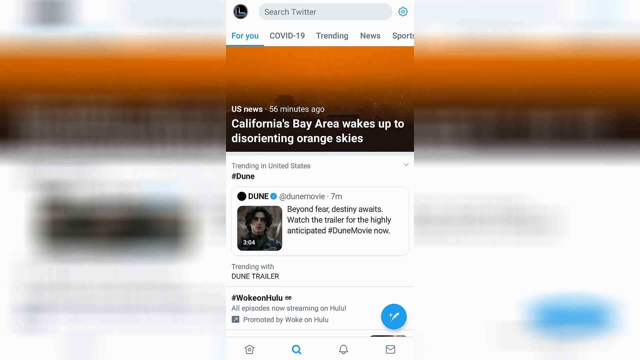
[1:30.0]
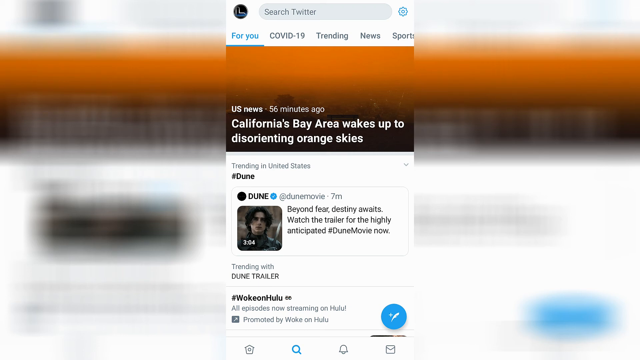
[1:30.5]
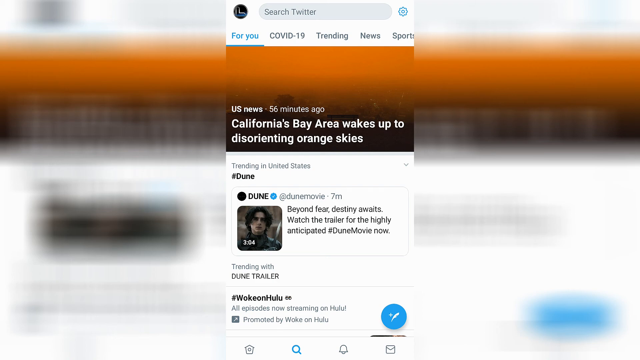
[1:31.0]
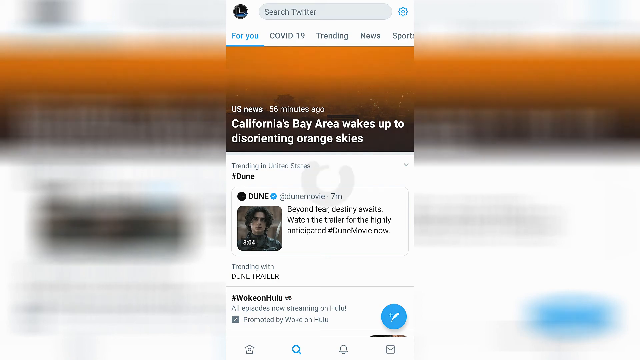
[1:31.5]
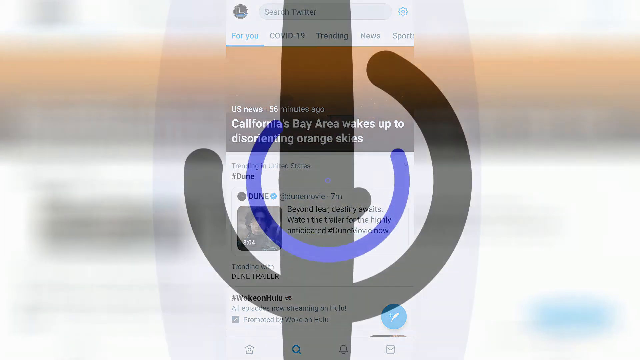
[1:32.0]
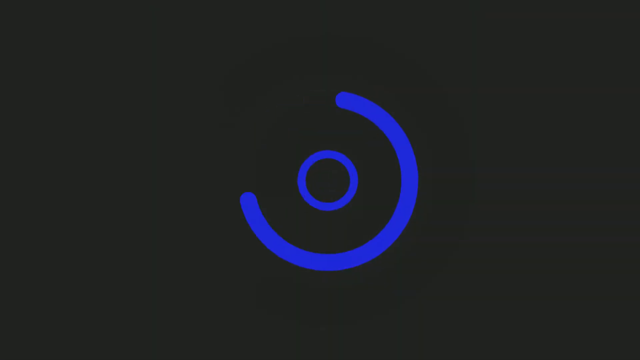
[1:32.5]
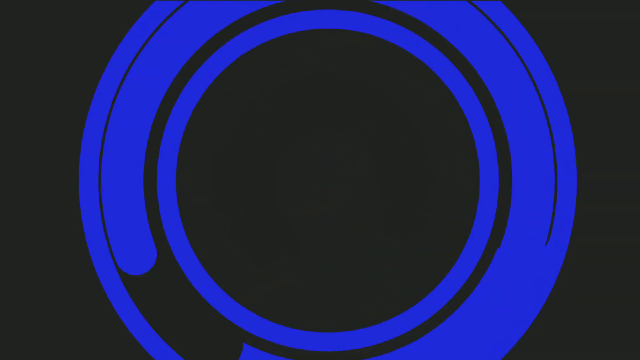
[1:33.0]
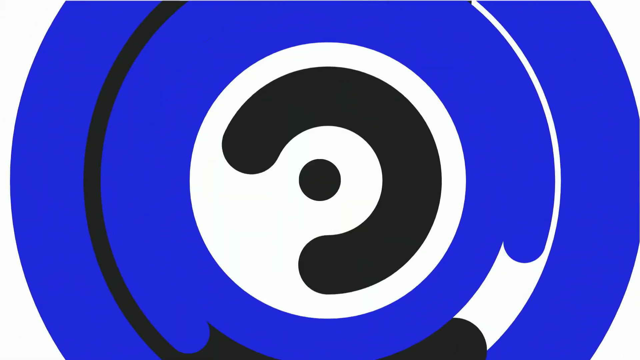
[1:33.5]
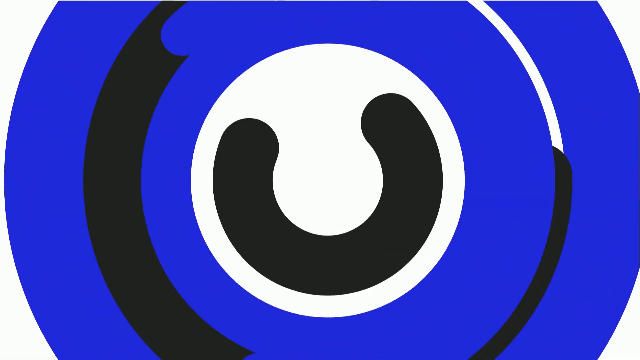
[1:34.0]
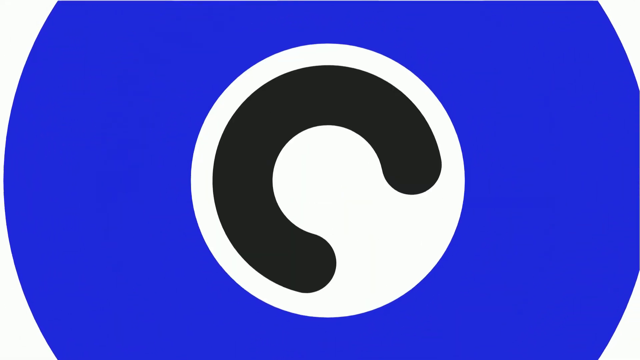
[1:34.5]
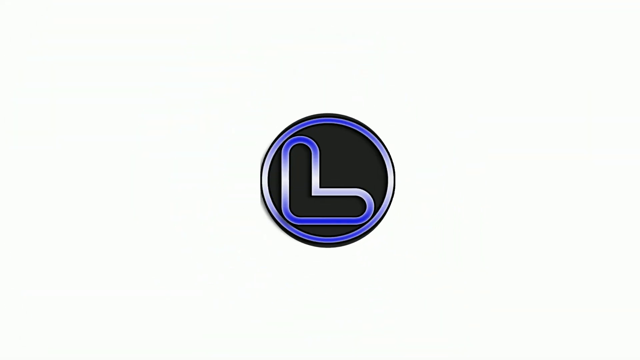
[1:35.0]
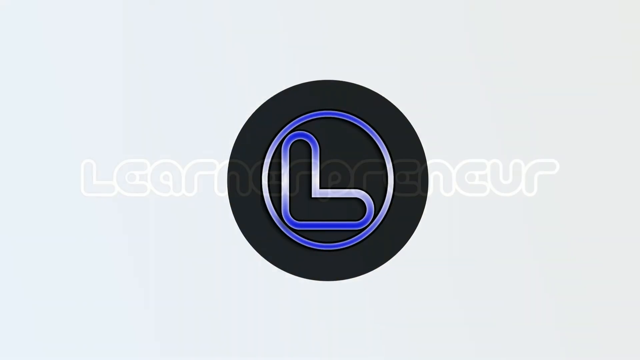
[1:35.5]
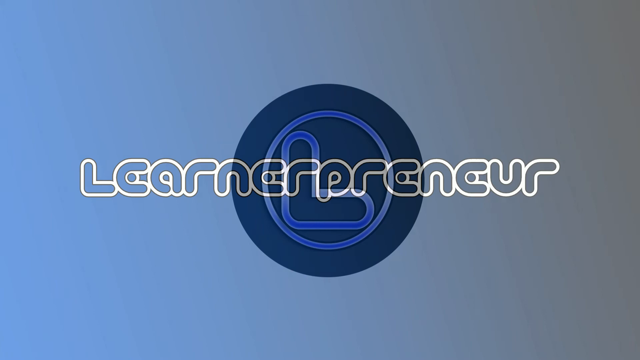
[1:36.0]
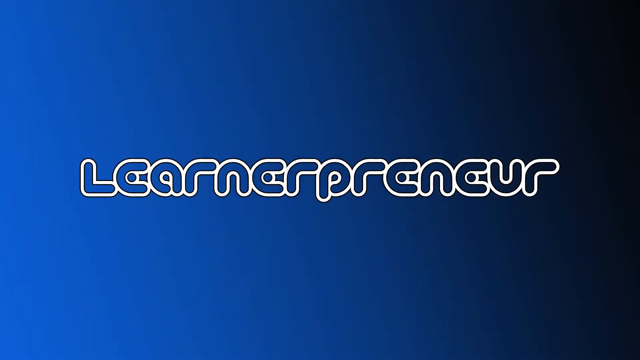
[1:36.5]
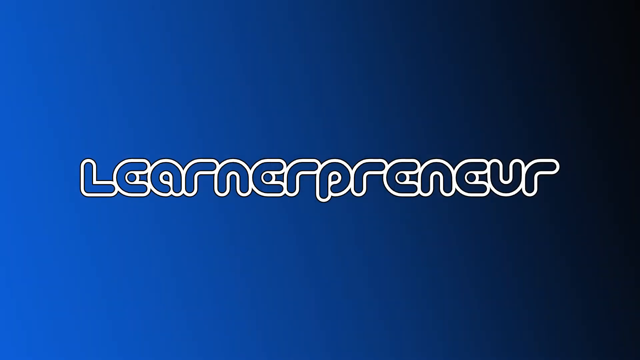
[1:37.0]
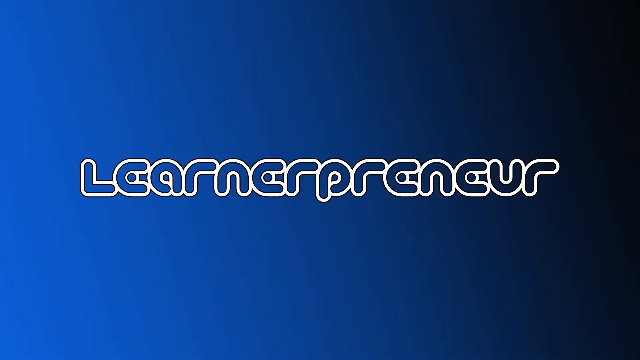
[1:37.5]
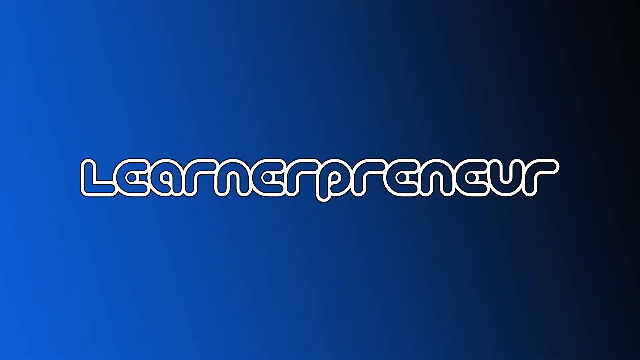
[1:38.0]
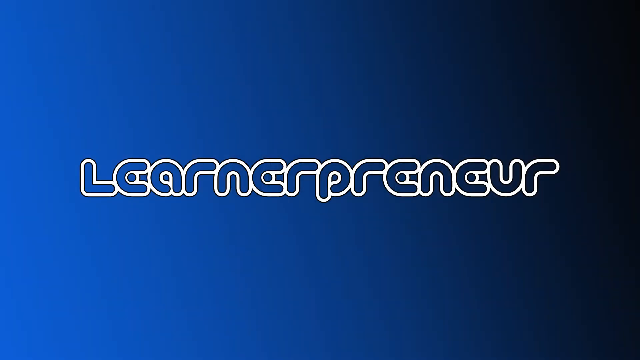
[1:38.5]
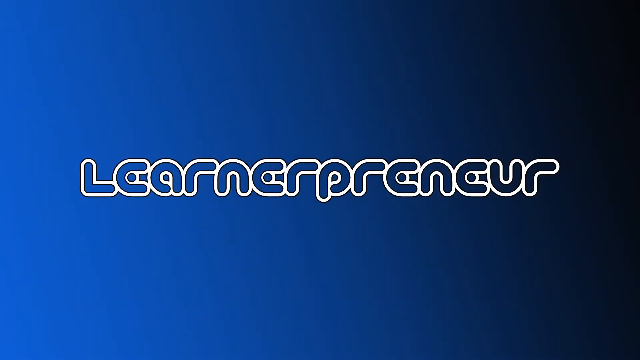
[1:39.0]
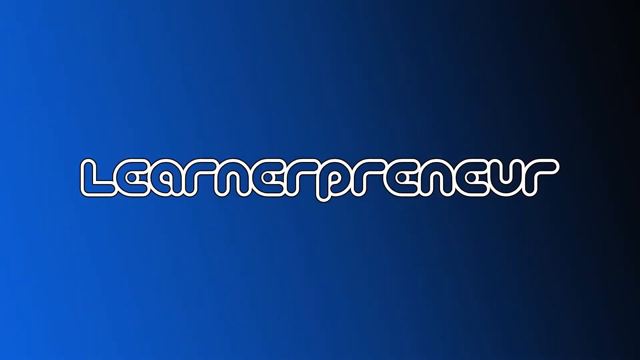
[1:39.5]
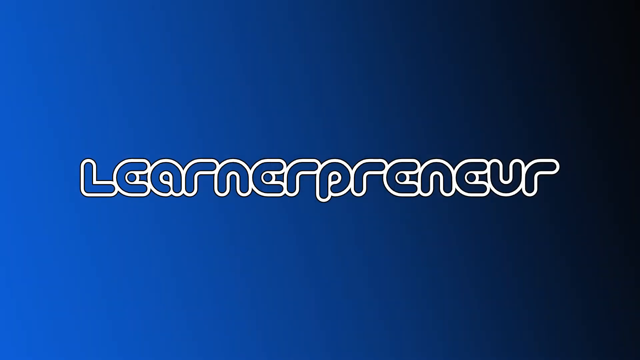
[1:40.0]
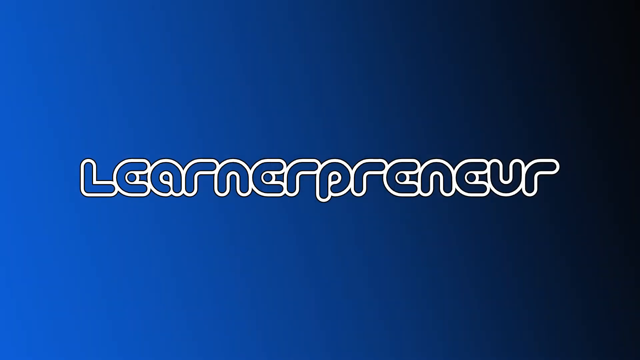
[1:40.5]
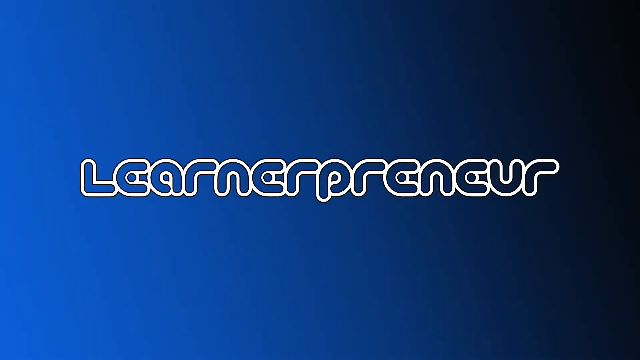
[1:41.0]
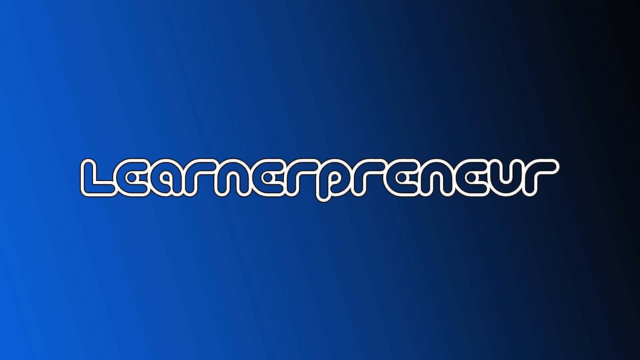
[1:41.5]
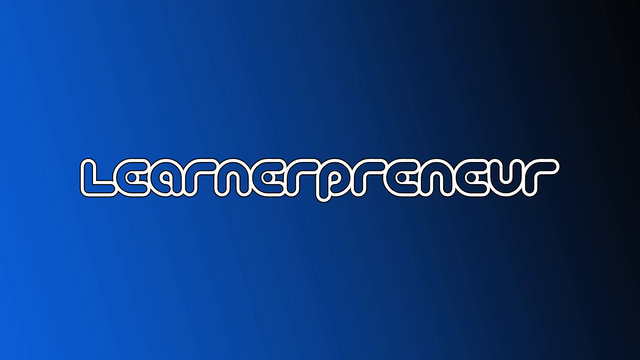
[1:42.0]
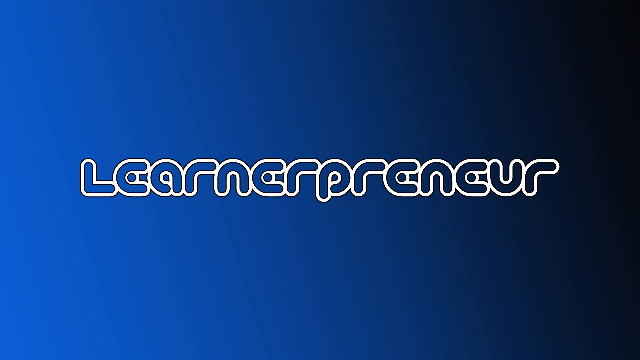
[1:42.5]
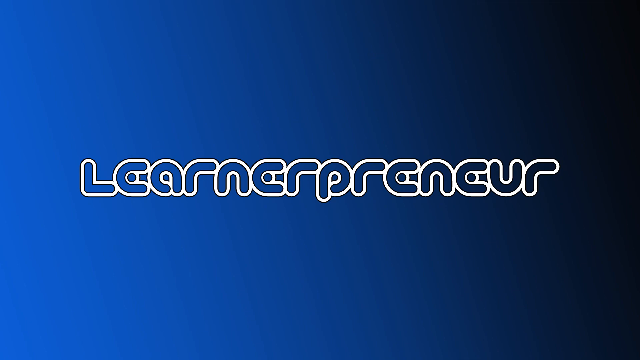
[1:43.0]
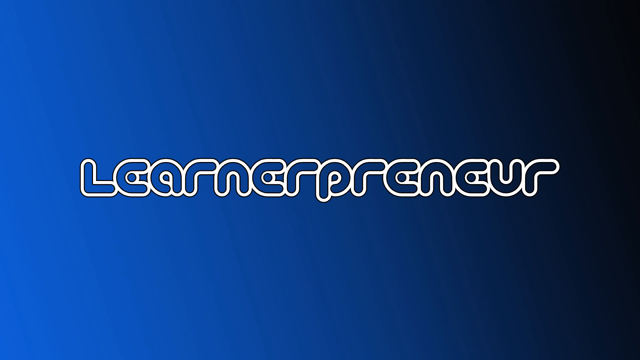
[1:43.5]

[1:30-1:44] The Twitter homepage is still shown, then fades into the concentric circle animation, with black and blue concentric circles circling around each other. This expands into the thicker blue concentric circle containing a white circle and then a black circle, which spins and becomes the L logo: the black circle, a blue and white gradient line circle, and the bubble letter L inside it touching the edges of the circle. This fades into another gradient, this one running from left to right, dark blue transitioning to black smoothly. Centered in the middle of the screen, the word "learnerpreneur" appears in a futuristic bubble letter font, with the letters drawn as outlines so the gradient background shows through. It remains on screen for the rest of the video.